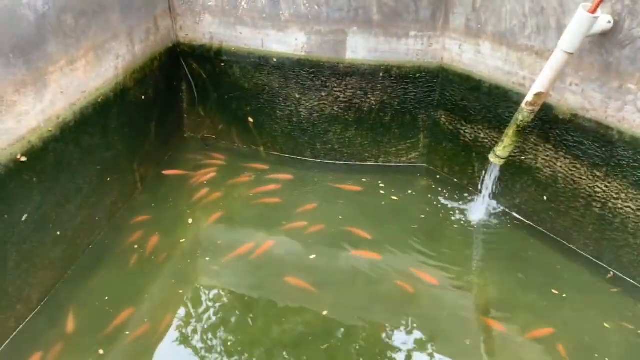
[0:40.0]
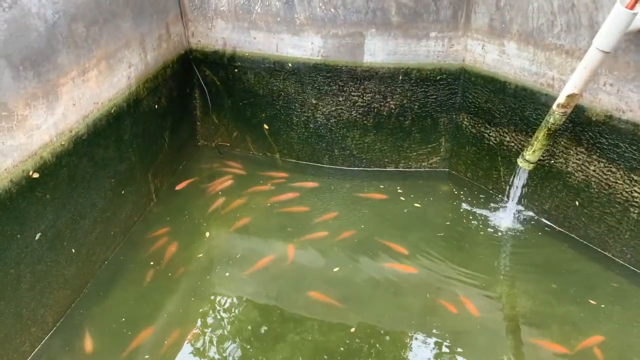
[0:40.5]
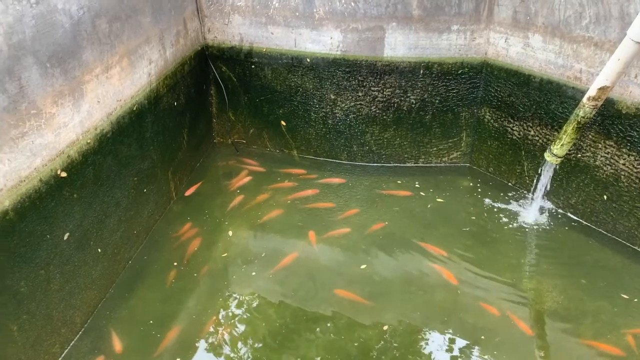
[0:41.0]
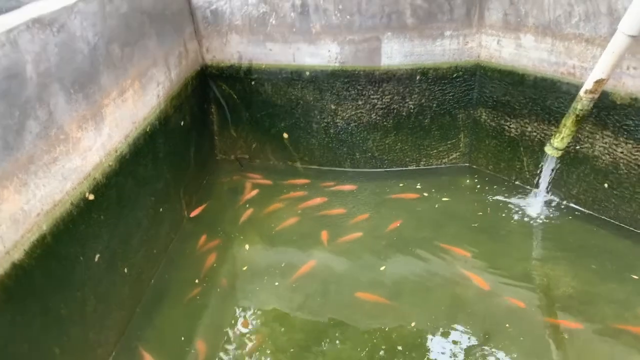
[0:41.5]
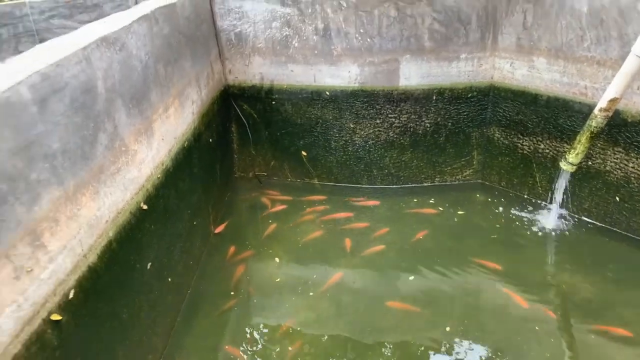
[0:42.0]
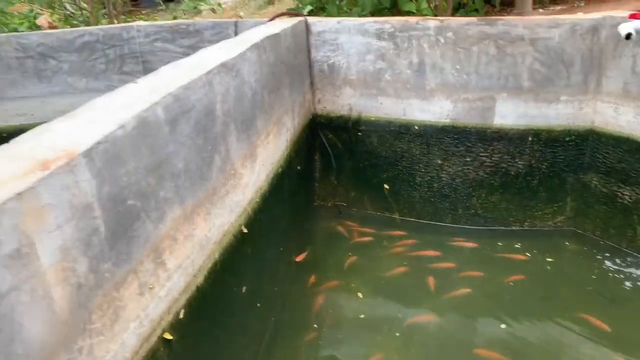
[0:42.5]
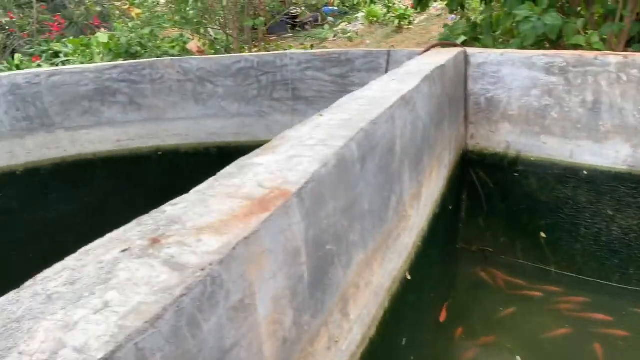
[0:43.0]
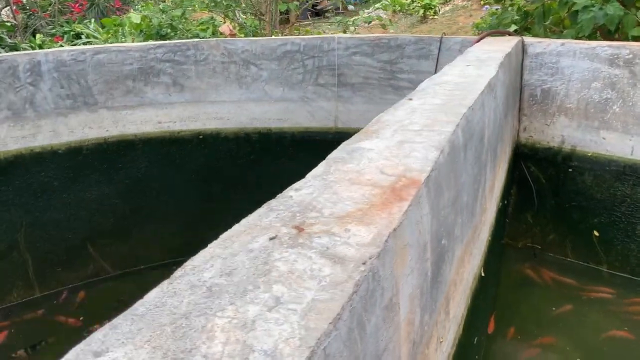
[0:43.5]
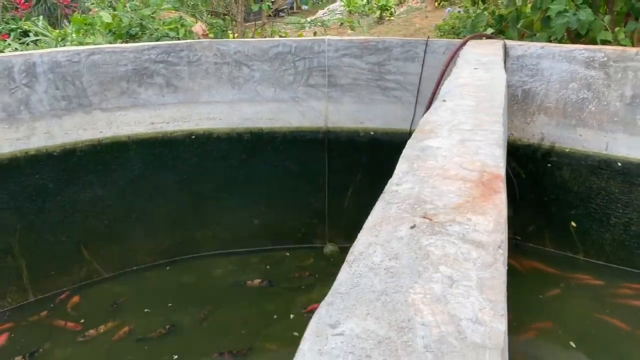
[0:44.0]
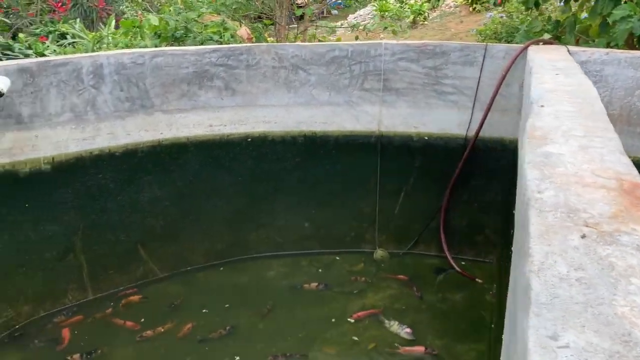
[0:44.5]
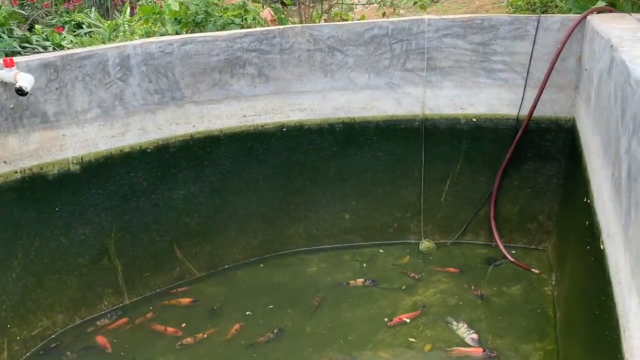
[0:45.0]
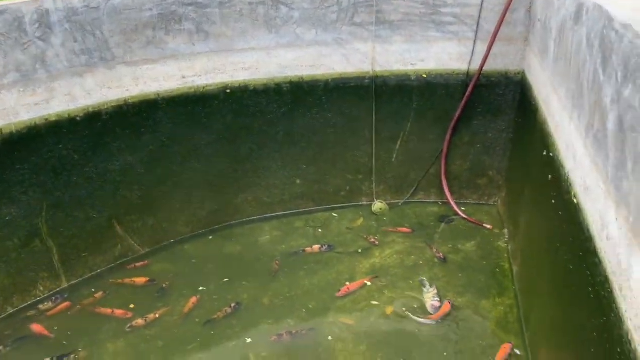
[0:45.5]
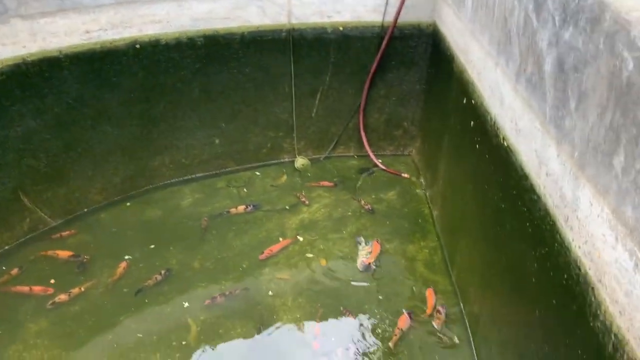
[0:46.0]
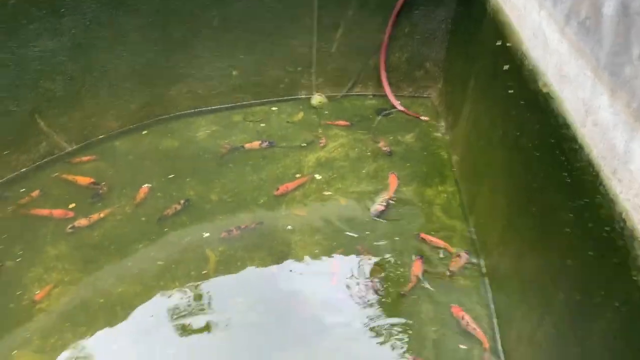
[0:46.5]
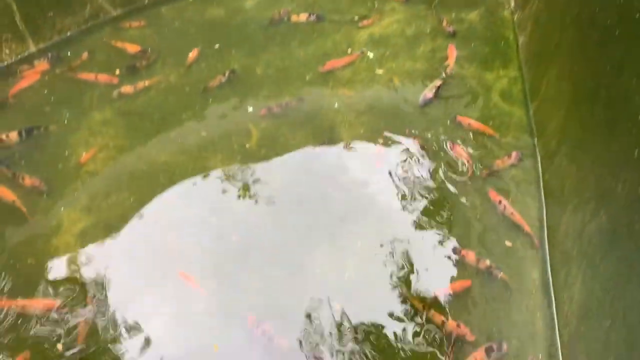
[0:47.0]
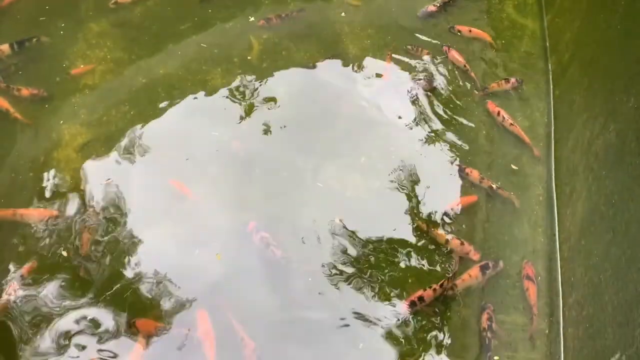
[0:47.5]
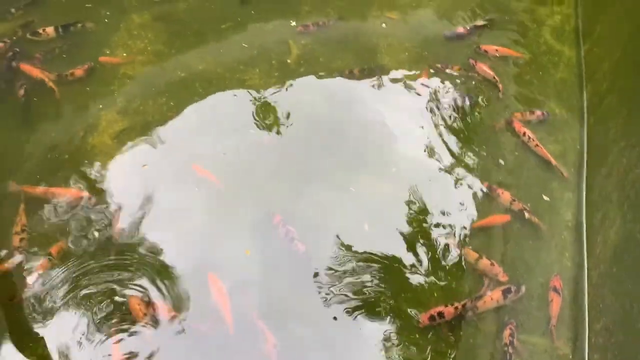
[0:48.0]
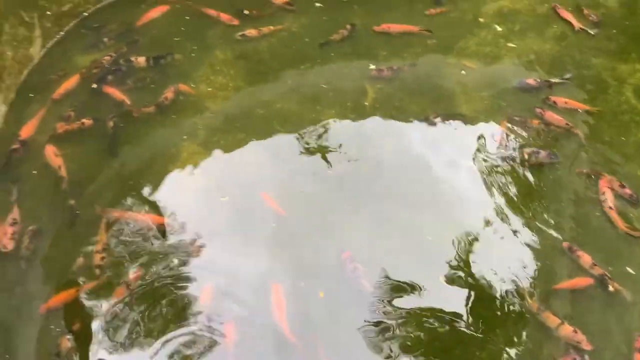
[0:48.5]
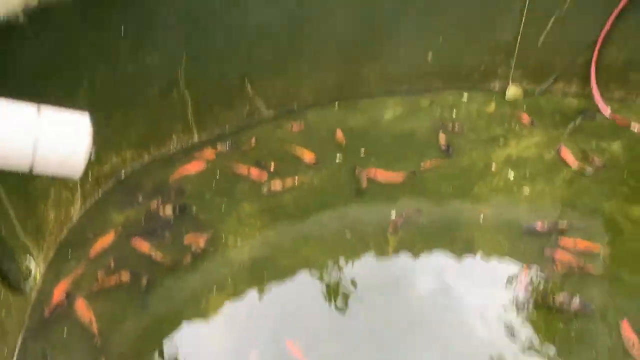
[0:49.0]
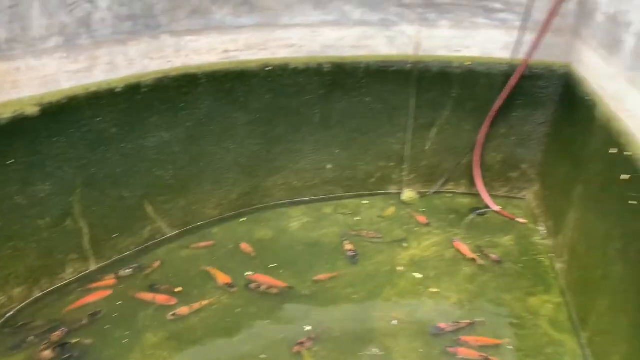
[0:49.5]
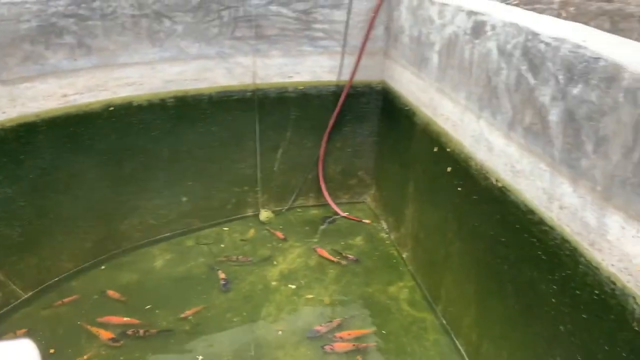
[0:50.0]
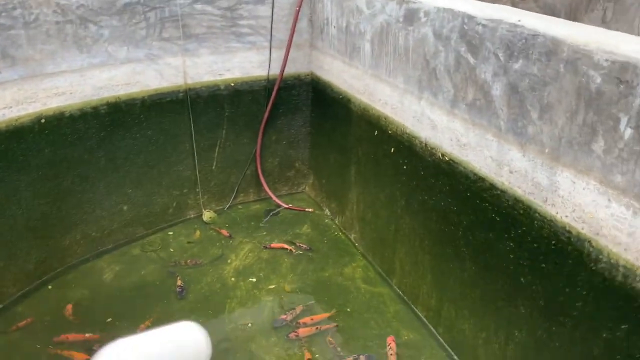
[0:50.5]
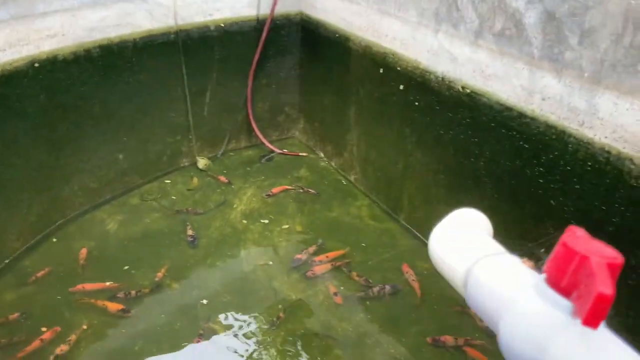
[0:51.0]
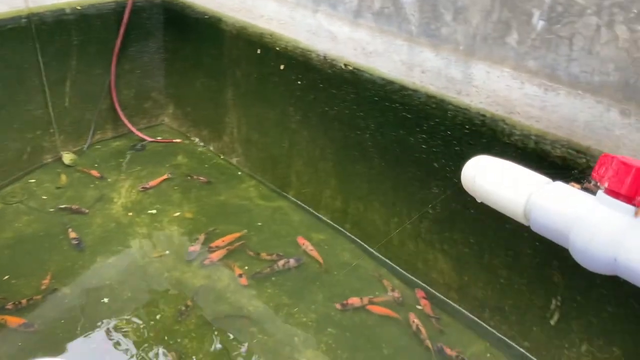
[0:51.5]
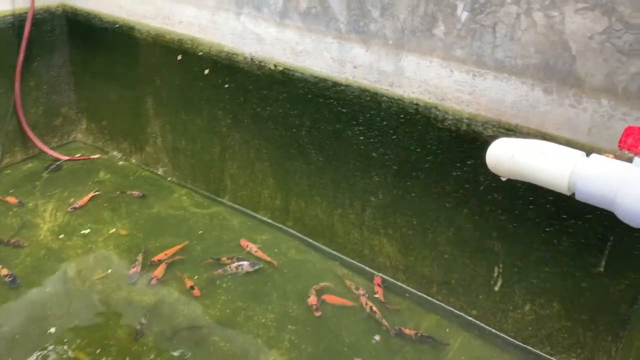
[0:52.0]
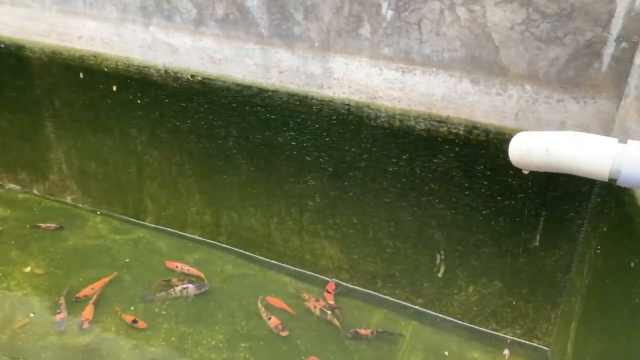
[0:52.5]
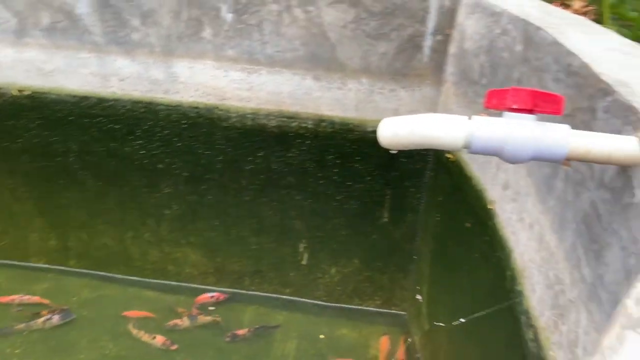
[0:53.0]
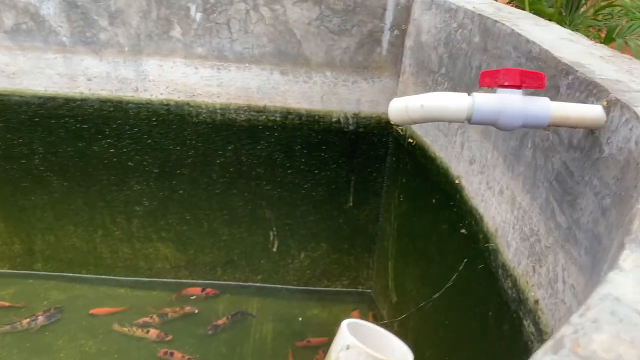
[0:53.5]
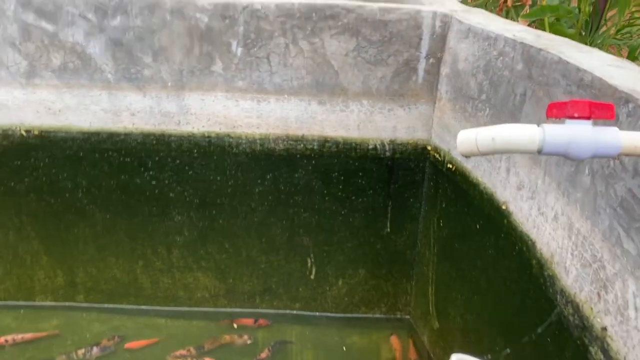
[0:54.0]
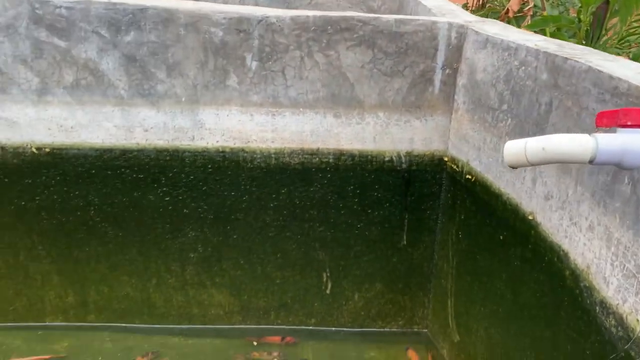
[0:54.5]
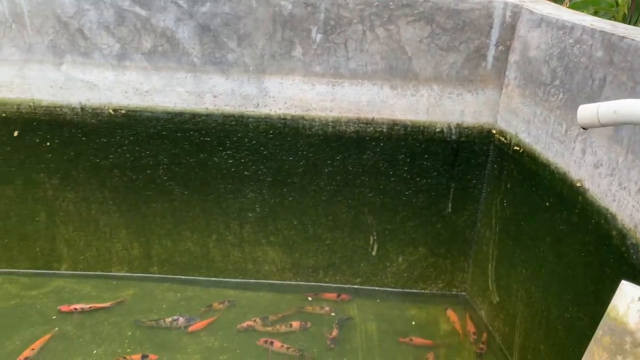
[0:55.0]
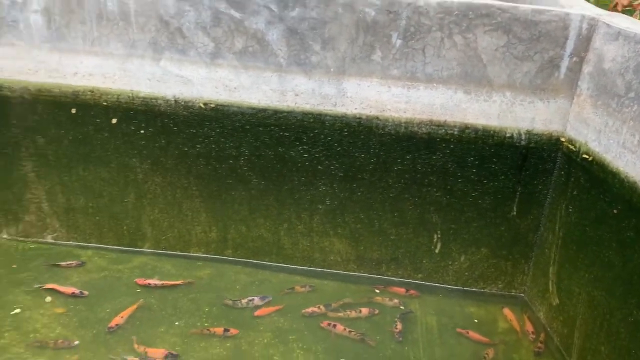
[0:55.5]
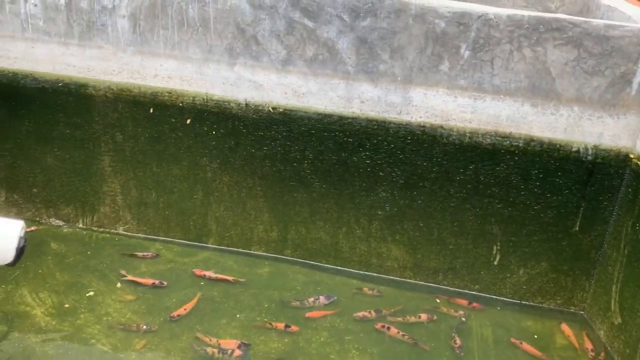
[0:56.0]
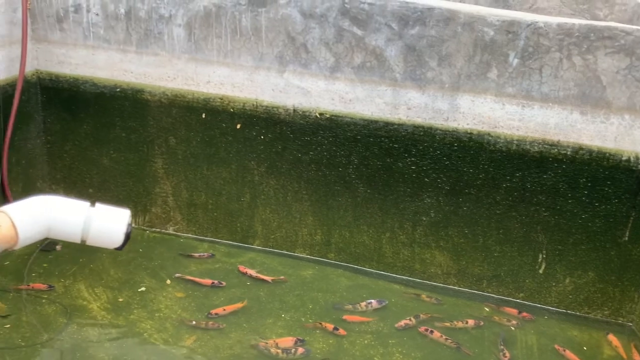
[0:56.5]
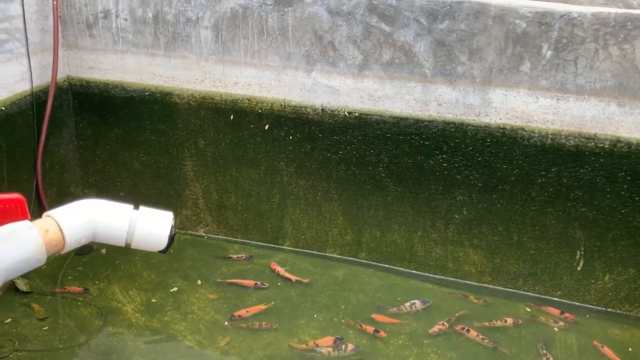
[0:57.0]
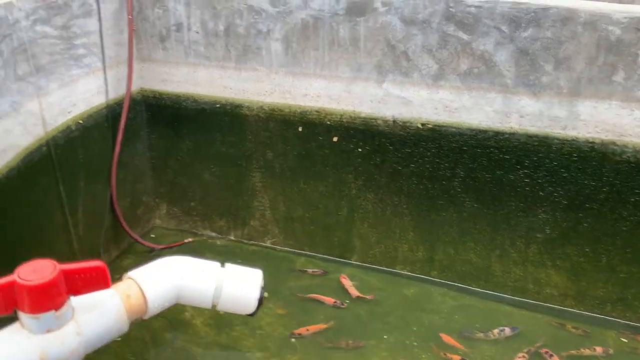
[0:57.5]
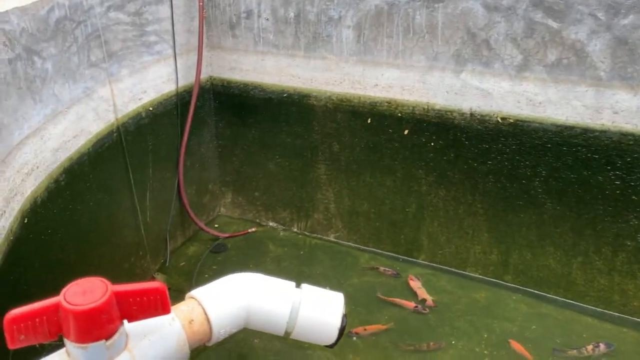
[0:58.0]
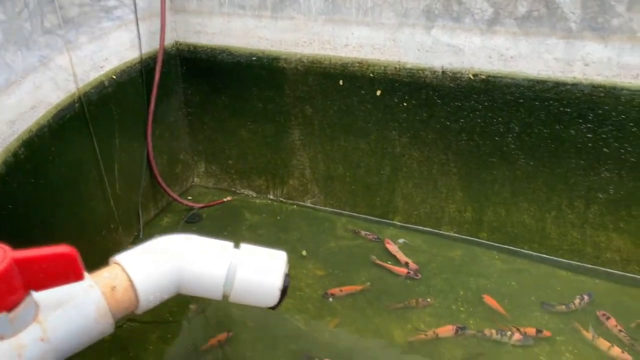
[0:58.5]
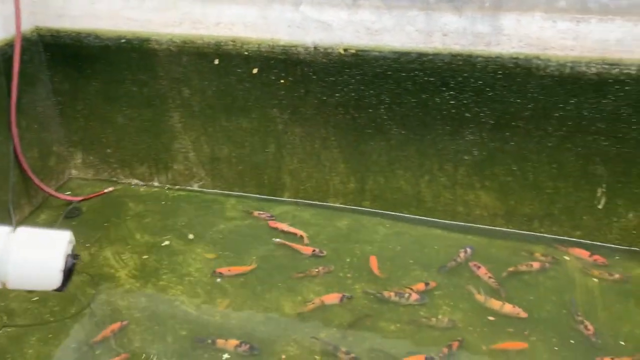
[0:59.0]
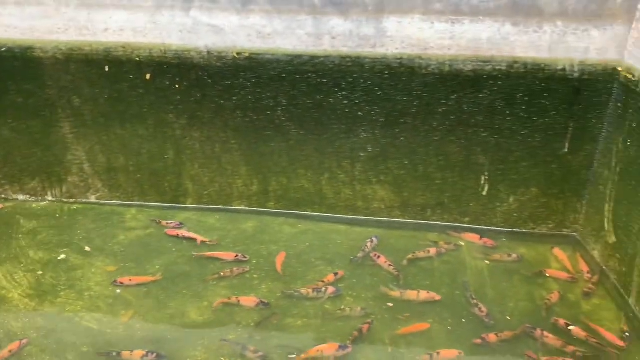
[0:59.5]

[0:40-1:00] A gray cement wall has a green section running downward from about halfway down, apparently where the water level was before. Inside the greenish water, small orange fish swim around the tank. A white pipe at the top right has an orange pipe going inside it, and fresh water comes out of the bottom of the pipe, which has kind of gone greenish. In the next tank there is again a gray cement wall up top with a barrier line of green, an orange hose at the bottom, and an orange fish in very shallow water. A white pipe on the right side has a red turn-off valve, and another is on the left side. Water runs through the piping while the other pipes are both shut off.